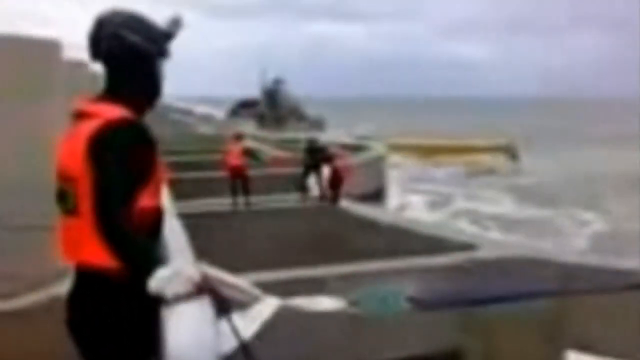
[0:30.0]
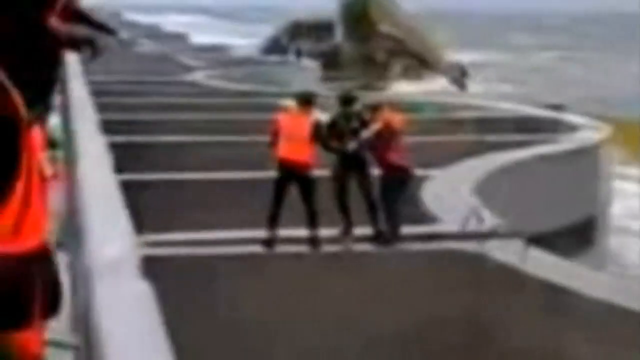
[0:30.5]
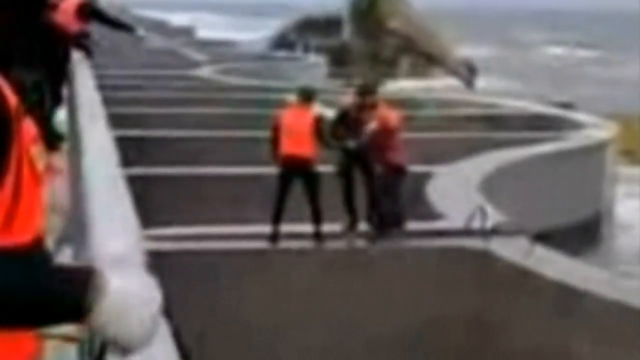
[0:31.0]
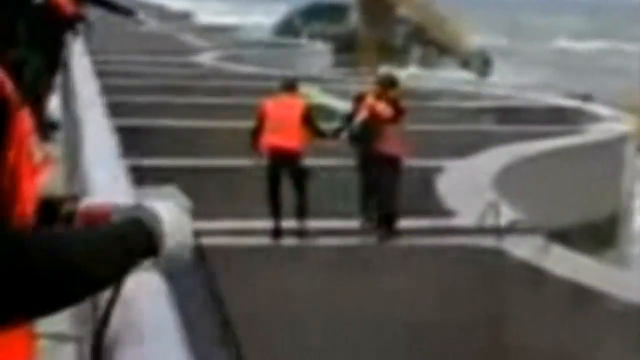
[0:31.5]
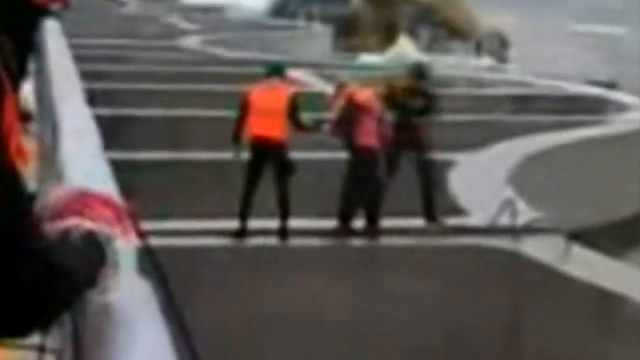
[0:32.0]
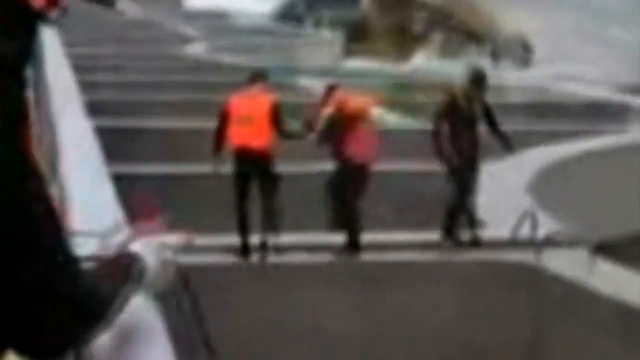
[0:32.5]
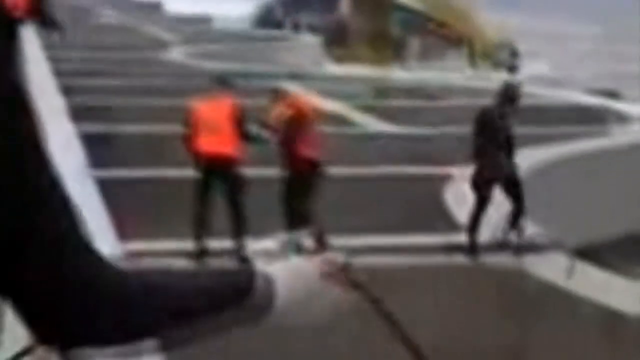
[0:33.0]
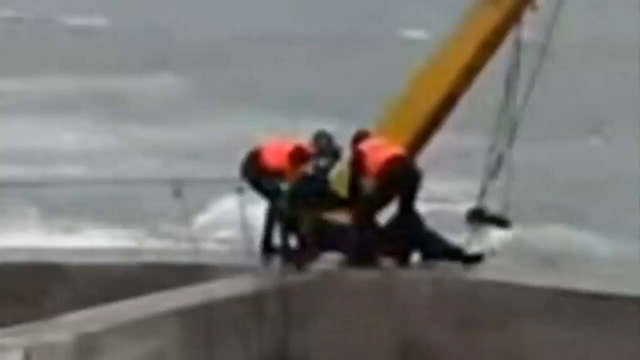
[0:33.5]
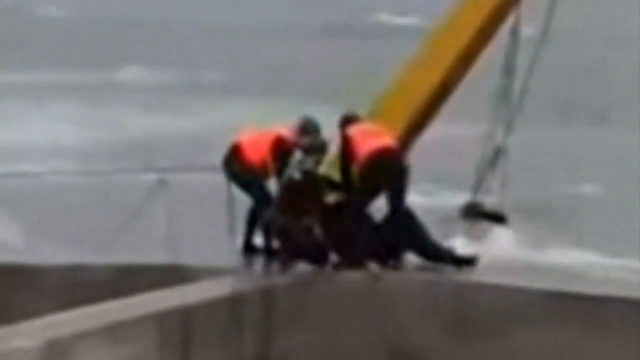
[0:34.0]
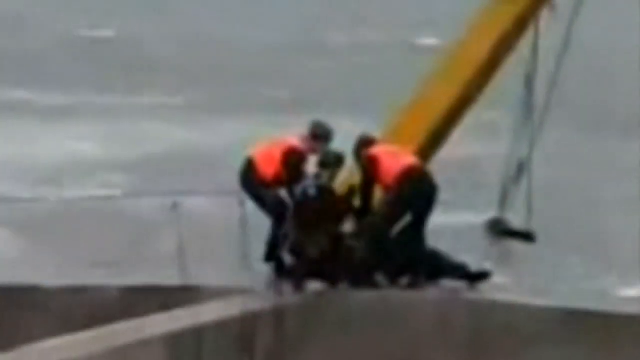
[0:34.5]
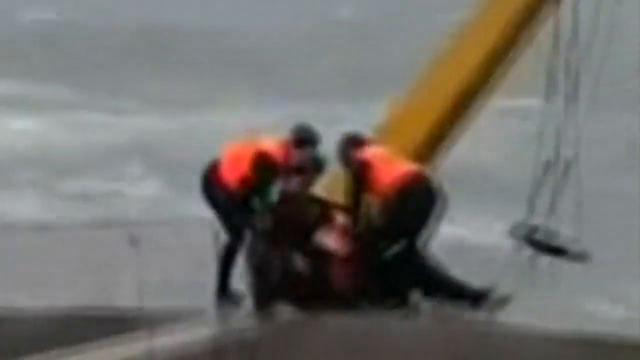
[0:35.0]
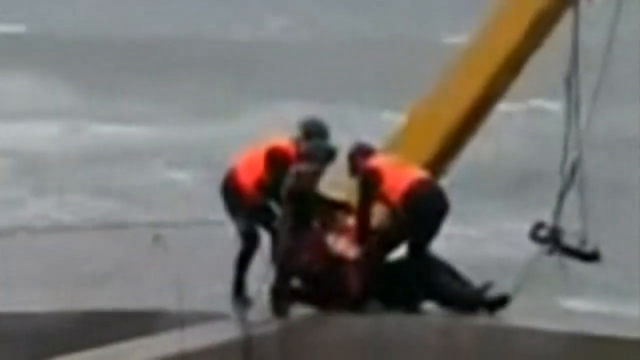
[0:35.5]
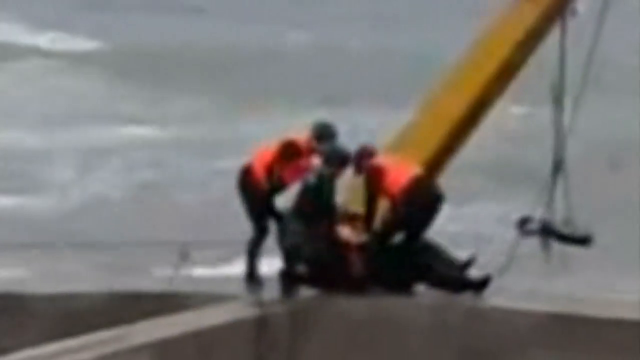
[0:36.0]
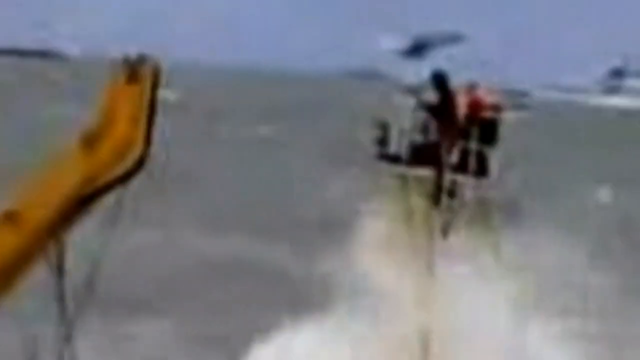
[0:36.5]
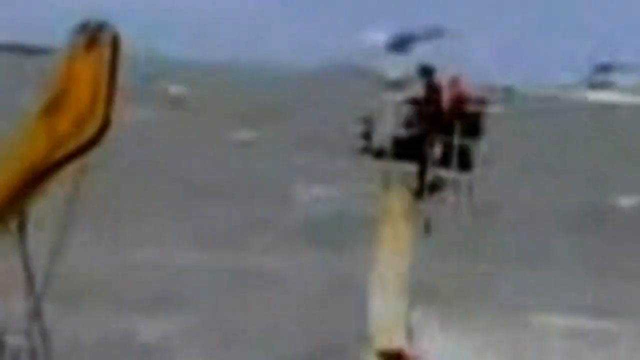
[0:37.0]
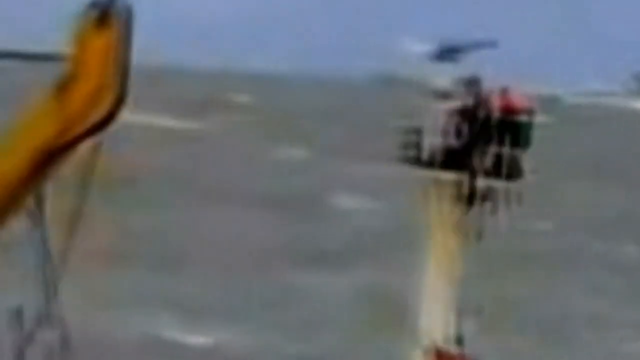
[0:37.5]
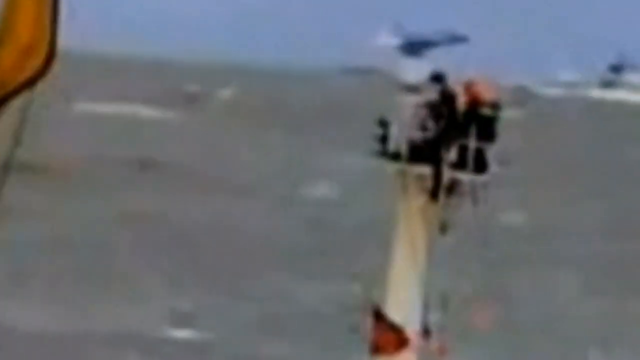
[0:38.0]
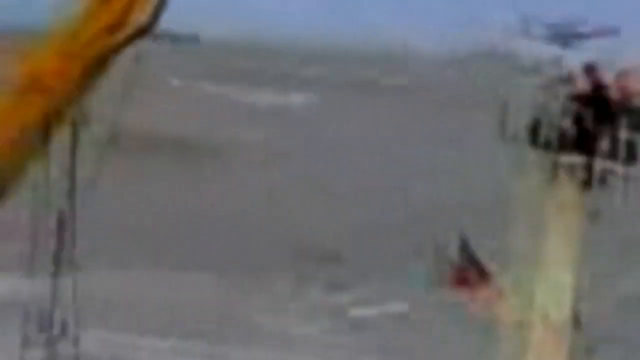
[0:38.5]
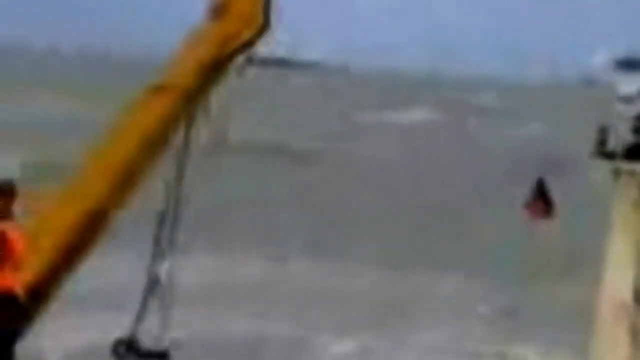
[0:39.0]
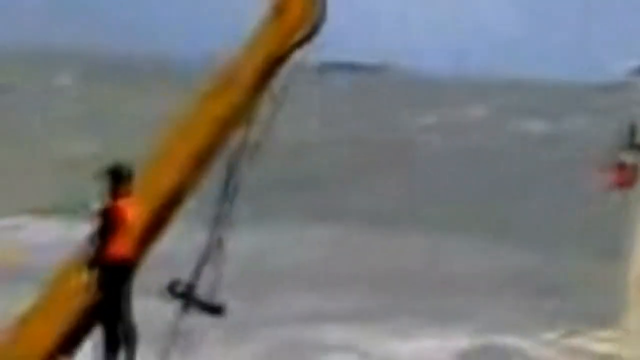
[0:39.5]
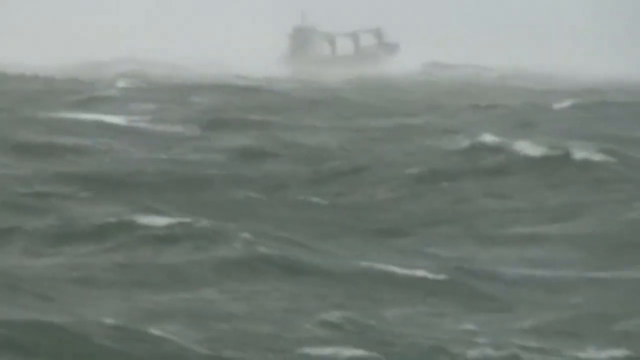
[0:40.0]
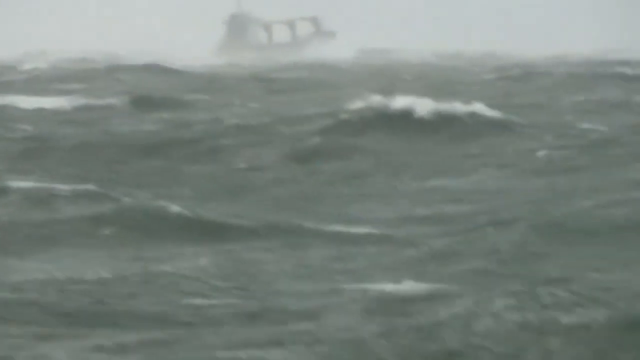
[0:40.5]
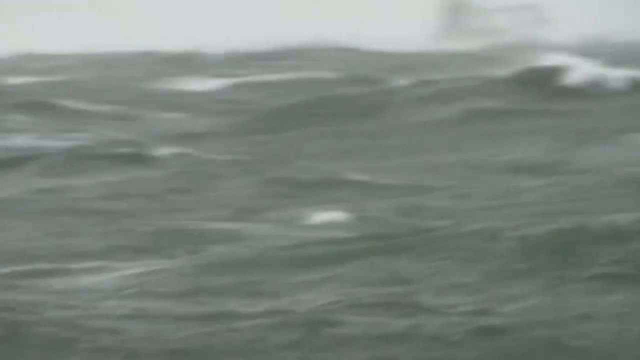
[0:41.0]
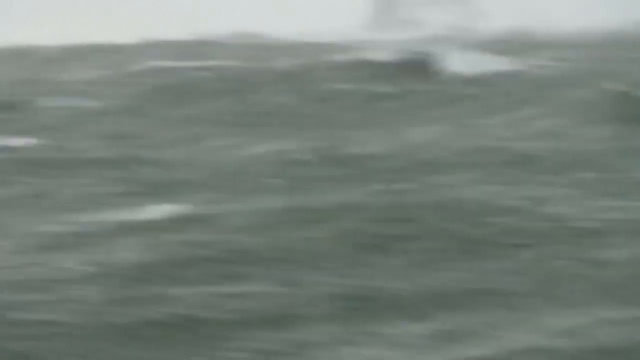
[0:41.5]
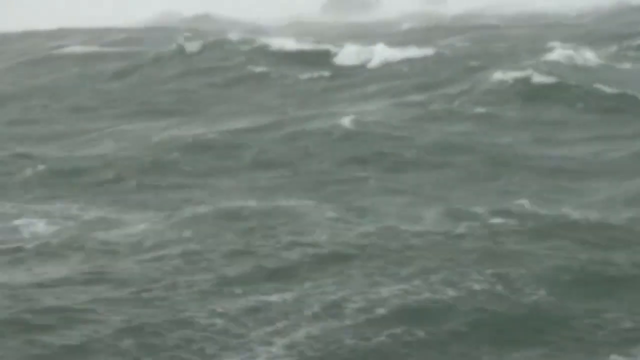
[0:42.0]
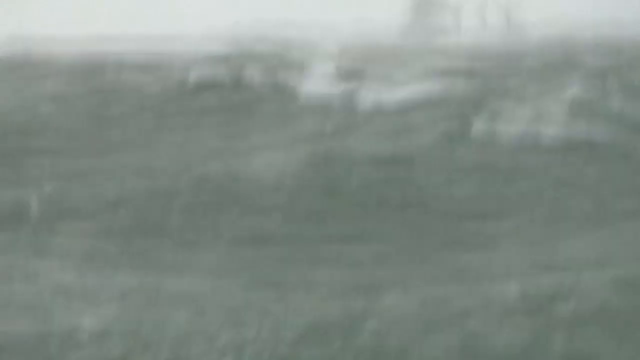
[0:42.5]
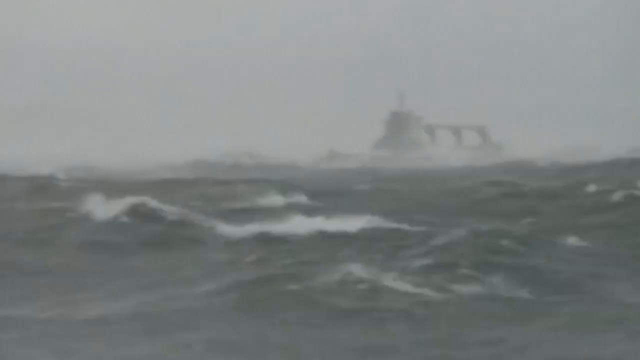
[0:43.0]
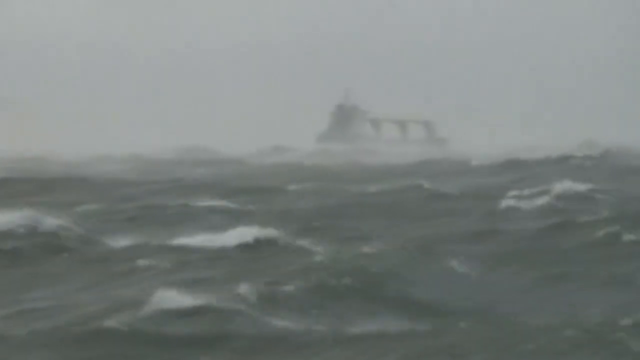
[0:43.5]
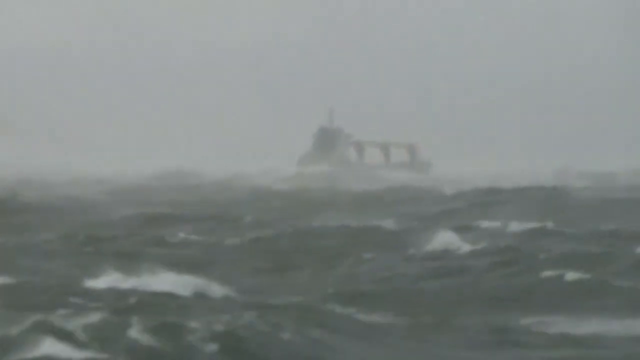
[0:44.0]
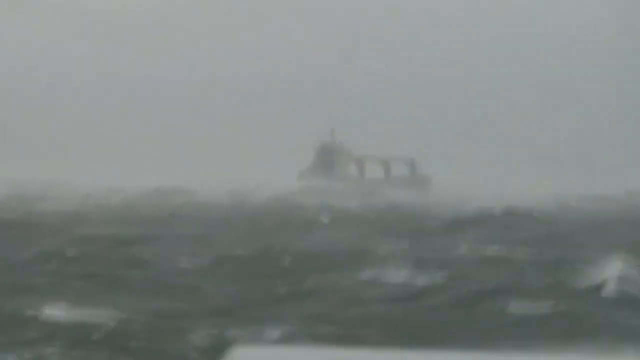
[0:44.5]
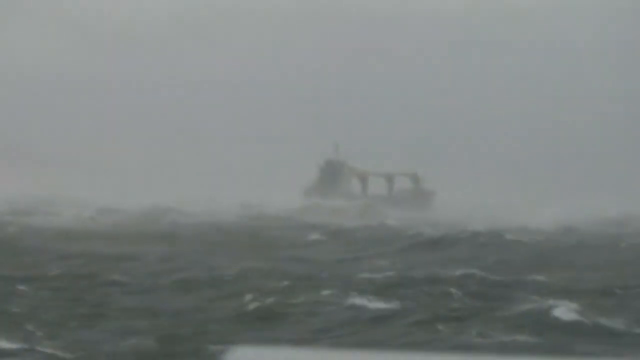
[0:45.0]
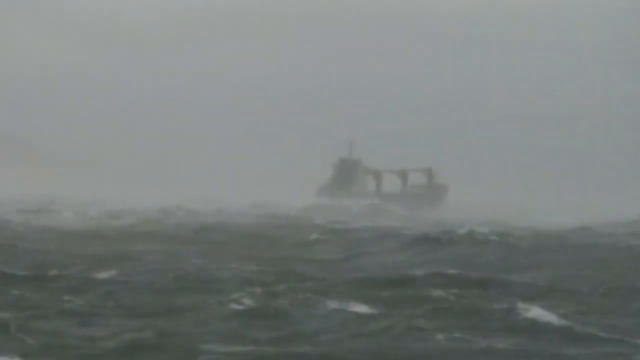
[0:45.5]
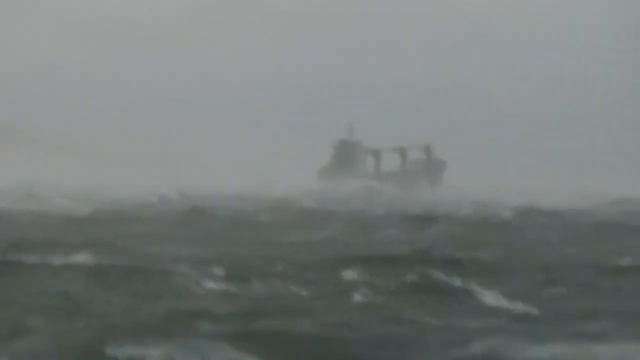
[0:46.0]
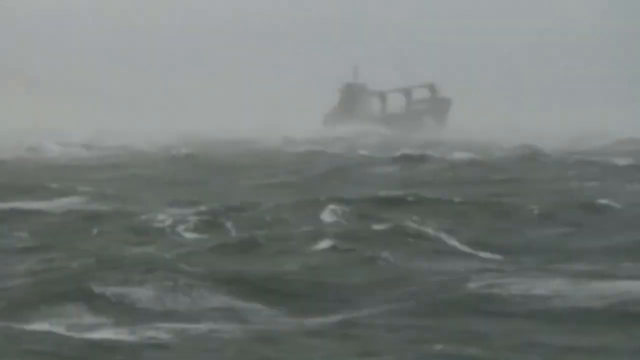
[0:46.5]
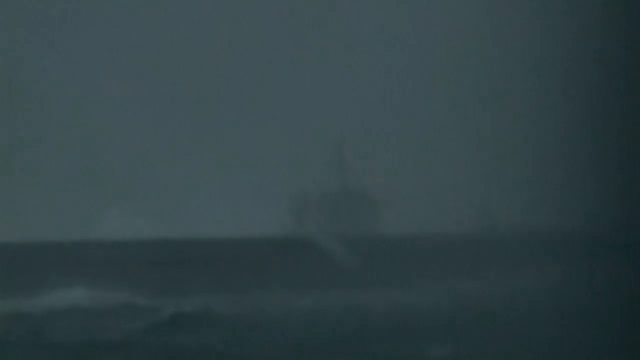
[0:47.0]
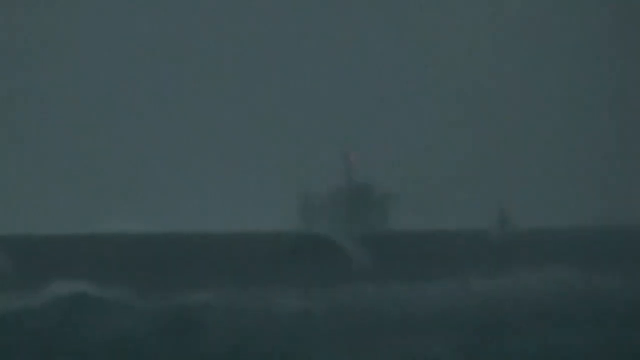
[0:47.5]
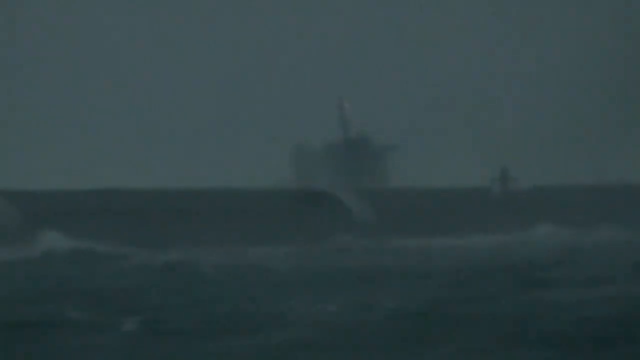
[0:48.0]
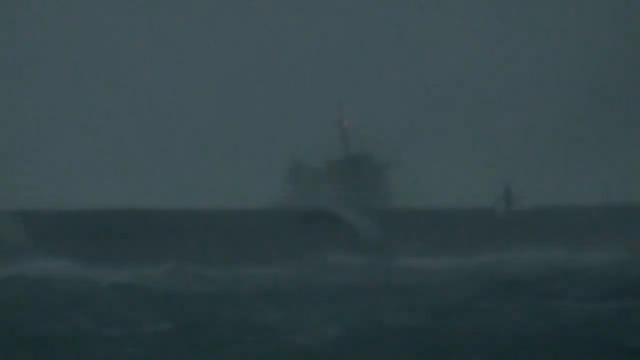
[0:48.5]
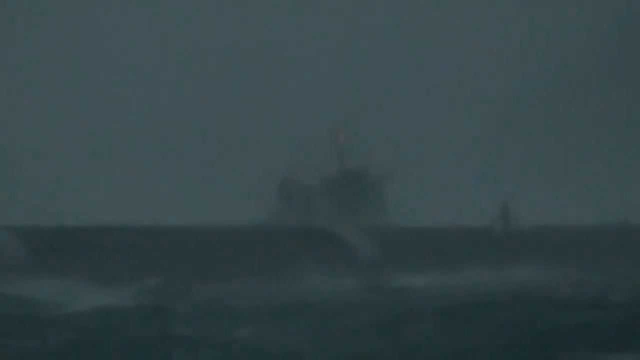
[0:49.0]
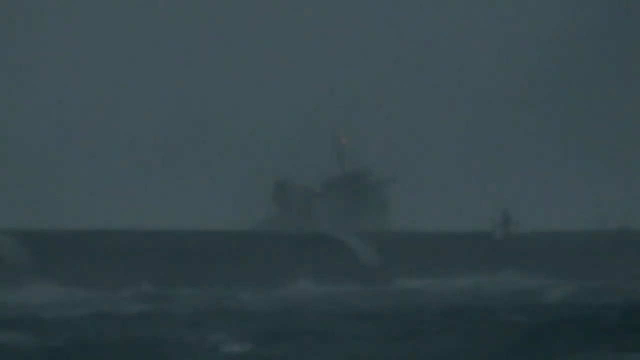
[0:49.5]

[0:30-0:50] On the deck of a ship at sea, the person closest to the camera on the left side of the screen is dressed in black with an orange vest. Further away and harder to see are three figures: the one on the left wears all black with an orange vest, another is all in black, and another is all in orange. The scene cuts to someone being rescued into the ship, then to someone being picked up from the surf. The ocean water is very rough. A boat is out at sea by itself, rocked by the hard waves. The sky is gray, and the ocean is very rough, with lots of waves and white water. The video is blurry and of poor quality.